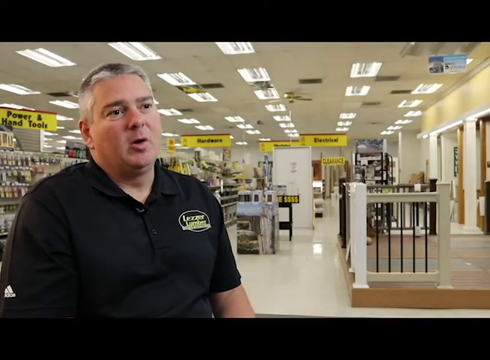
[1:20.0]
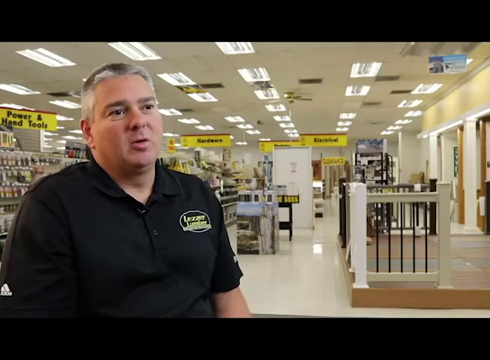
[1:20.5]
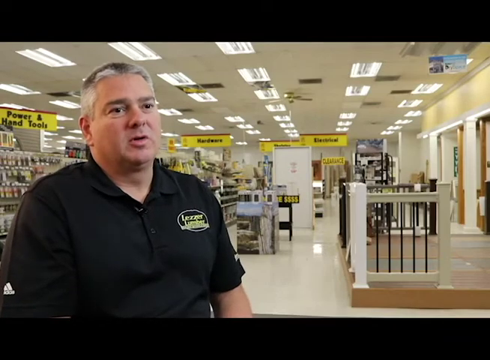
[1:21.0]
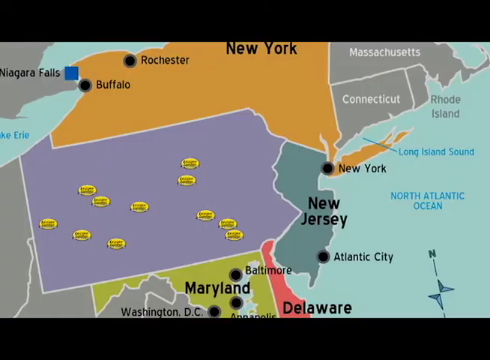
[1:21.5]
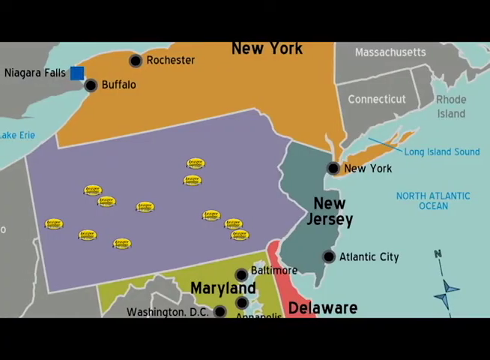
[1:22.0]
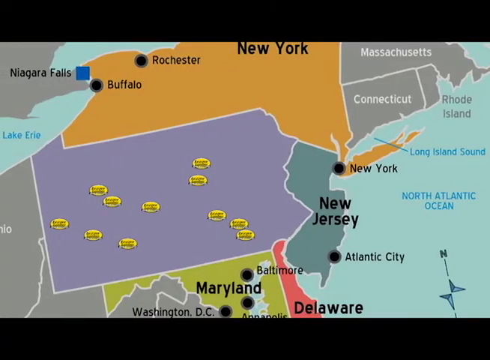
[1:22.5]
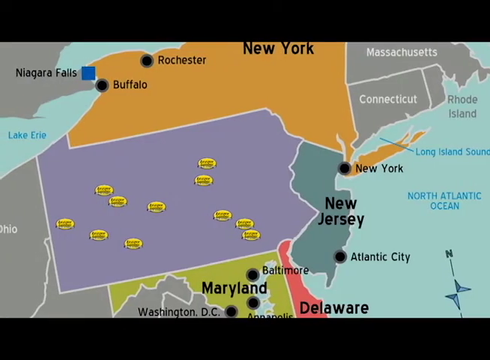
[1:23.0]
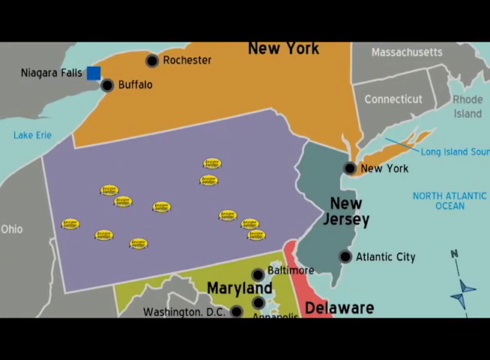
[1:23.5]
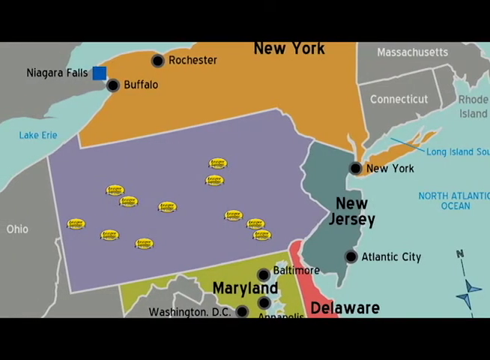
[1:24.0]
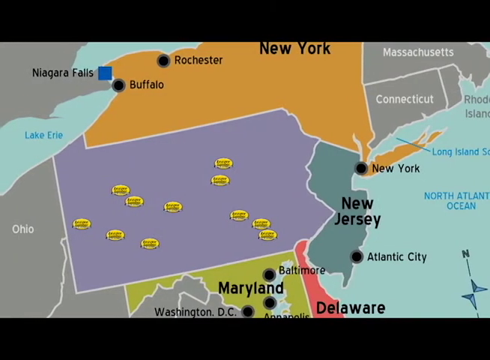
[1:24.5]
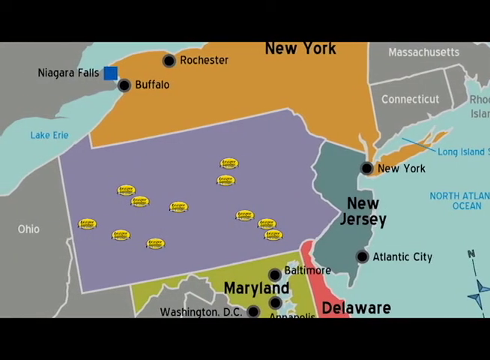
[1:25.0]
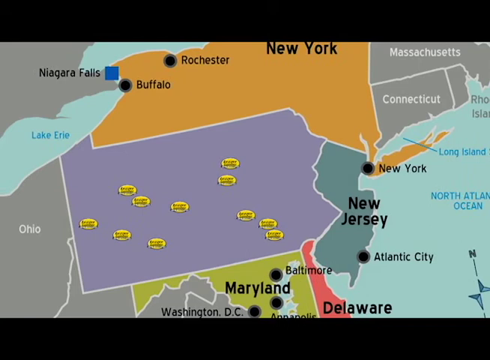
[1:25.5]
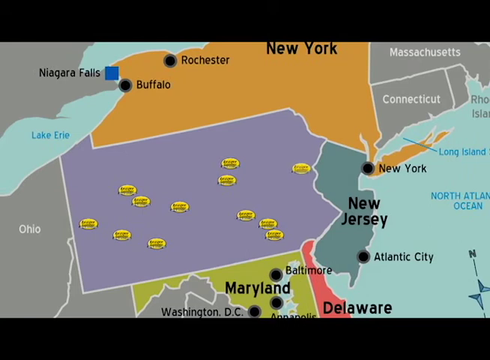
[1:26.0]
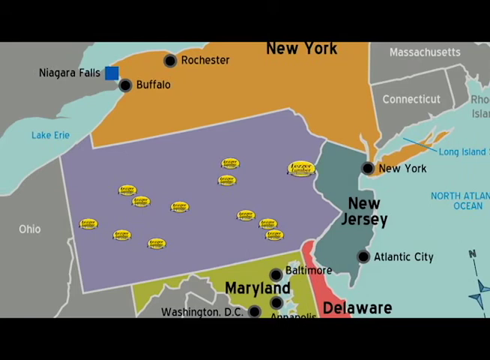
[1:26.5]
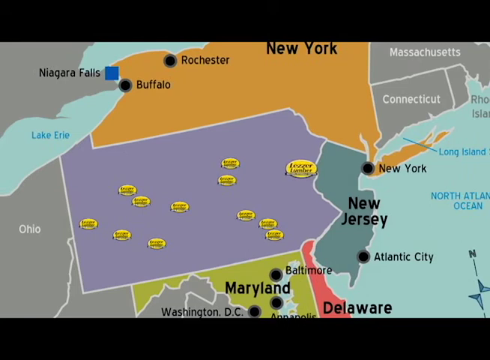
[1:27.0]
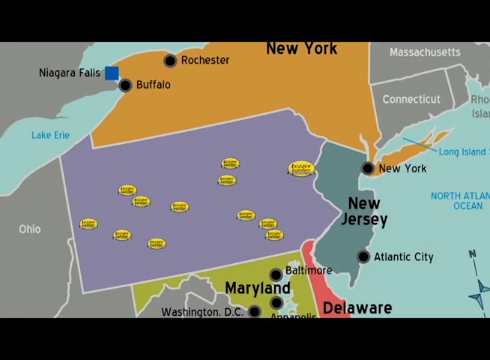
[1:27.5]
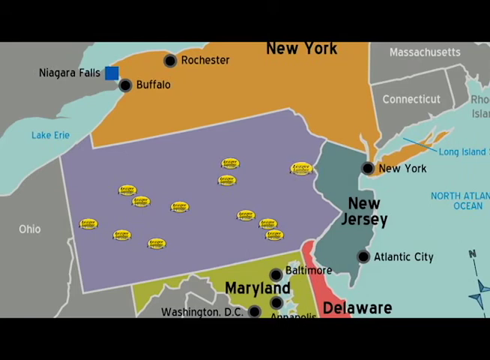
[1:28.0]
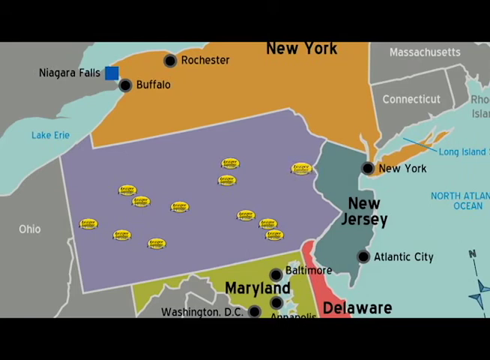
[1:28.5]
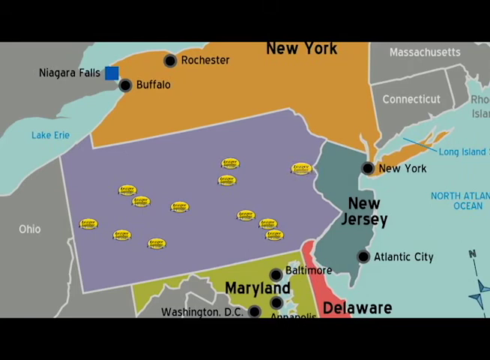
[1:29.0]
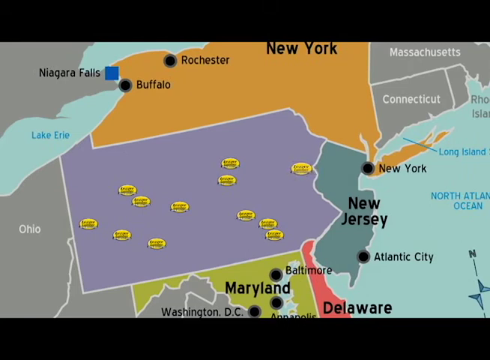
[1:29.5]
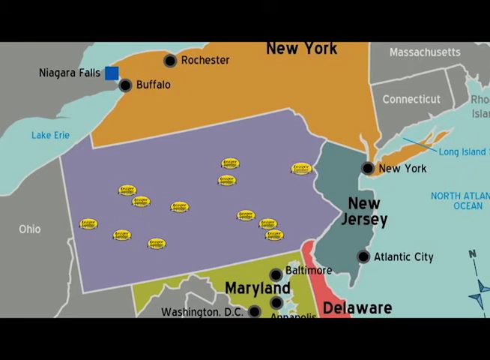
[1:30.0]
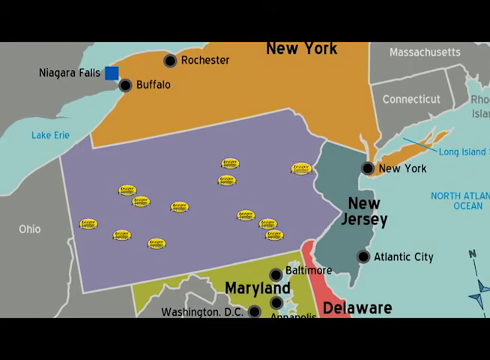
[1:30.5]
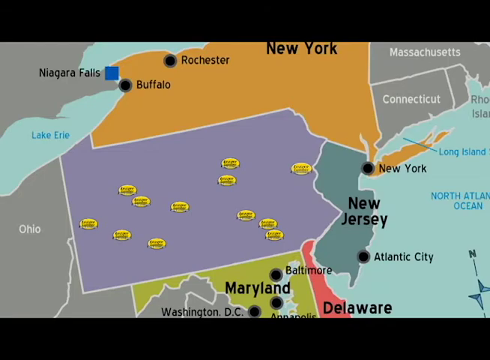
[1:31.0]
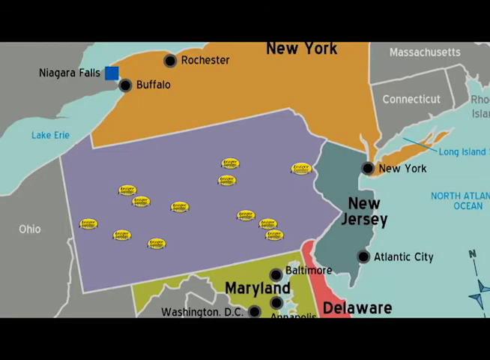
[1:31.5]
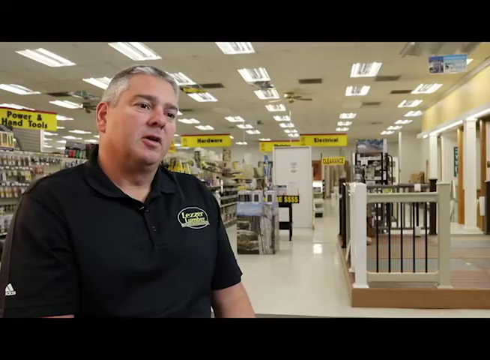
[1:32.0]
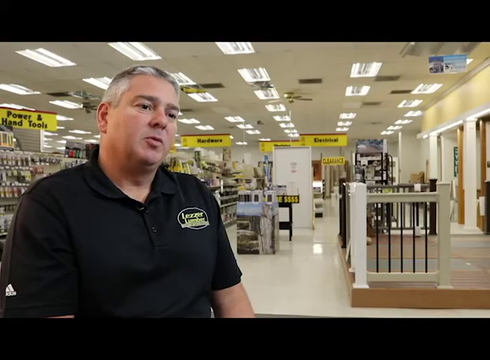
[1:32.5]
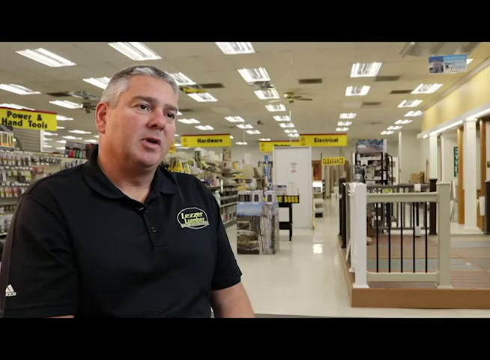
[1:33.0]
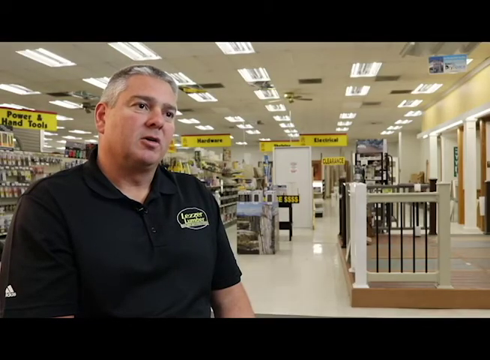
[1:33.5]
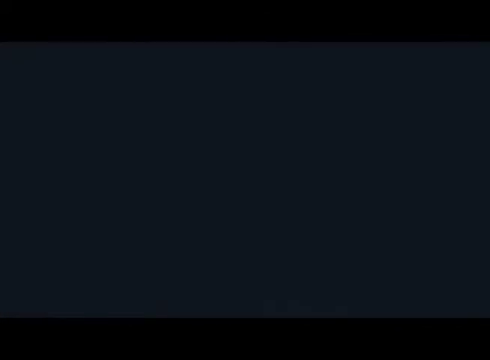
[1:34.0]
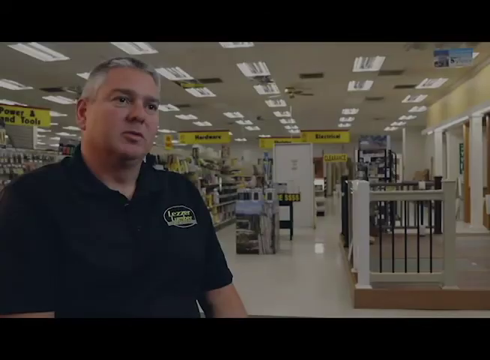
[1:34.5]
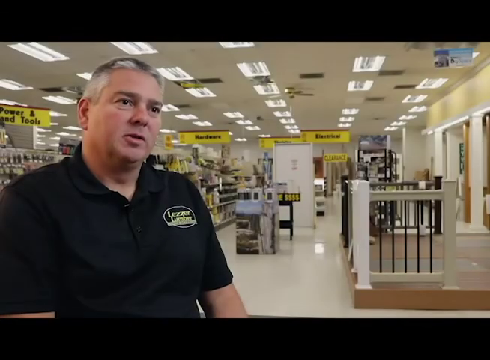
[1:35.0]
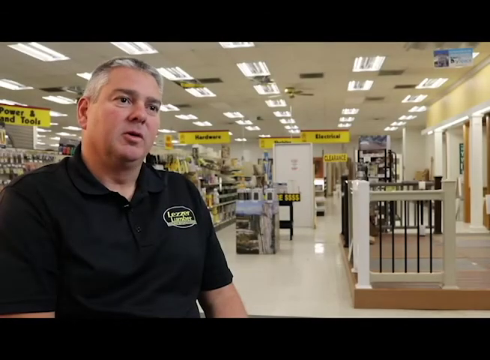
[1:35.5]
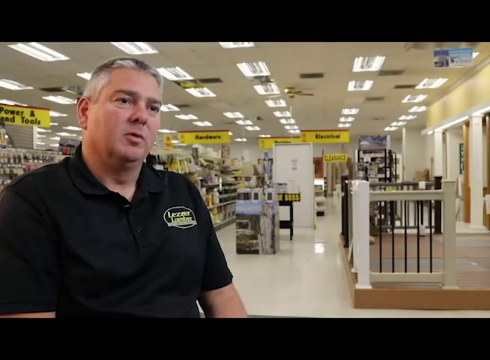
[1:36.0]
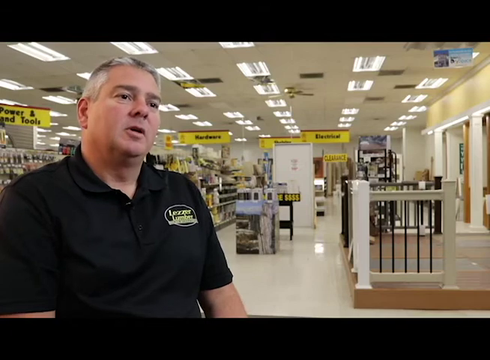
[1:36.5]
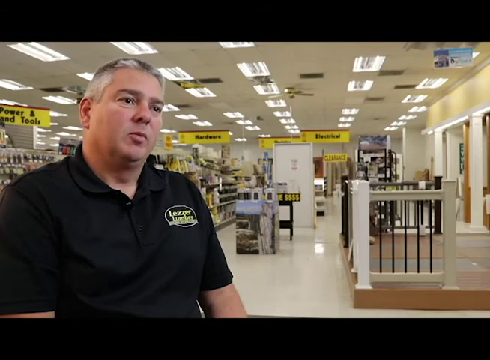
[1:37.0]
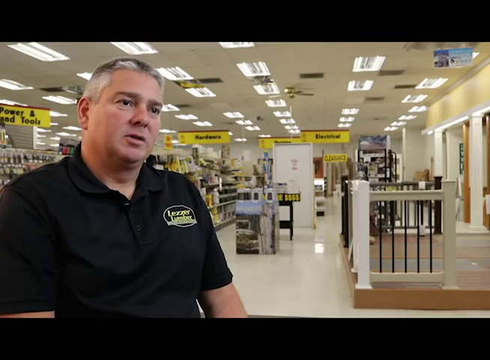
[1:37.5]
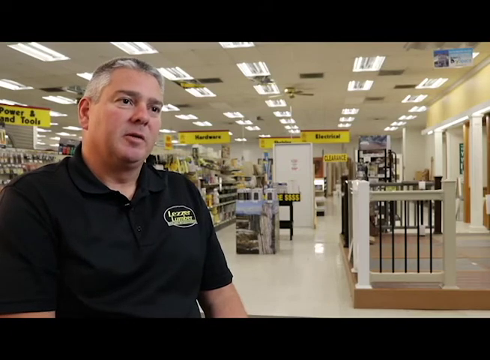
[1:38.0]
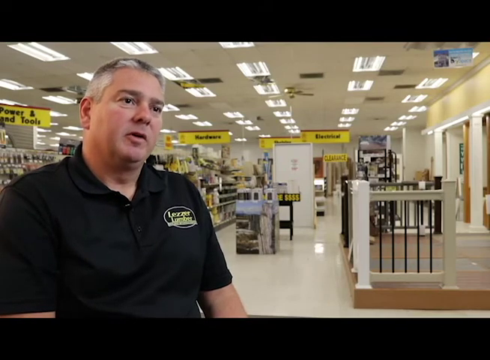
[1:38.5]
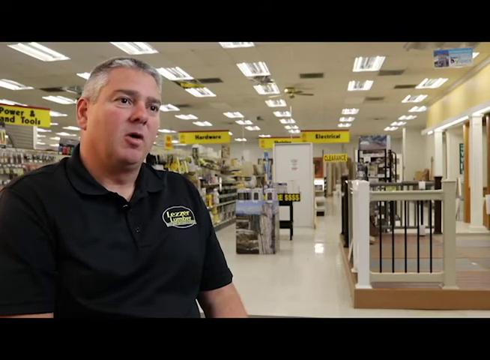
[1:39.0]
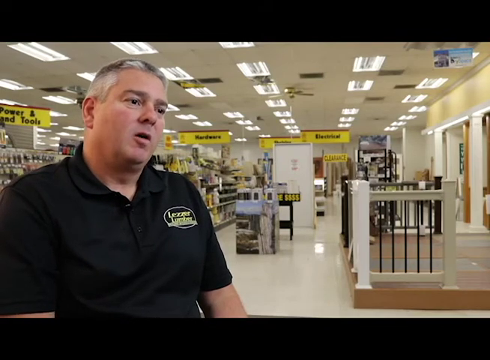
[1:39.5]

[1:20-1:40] The man in the short black shirt stands in the store, still talking to somebody off camera. Next, the map appears, now with Pennsylvania in a light purple color and no words in it. Inside Pennsylvania are 11 small yellow oval shapes with black writing in them, which appear to show where the stores are located within the state. New York, New Jersey, Maryland, Delaware and Niagara Falls are still visible, all displayed in different colors. The shot returns to the man standing and talking in the store. He has a logo on his left chest, and behind him are rows of items. A camera is visible in the top right-hand corner, and rows of rectangular lights on the ceiling above the man go all the way to the end of the store.